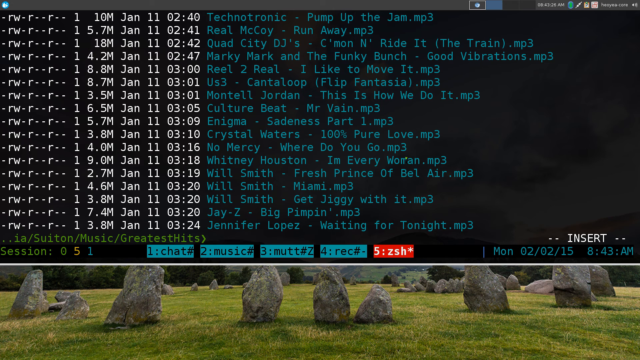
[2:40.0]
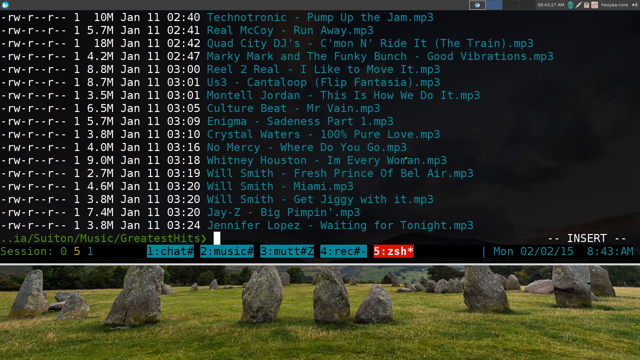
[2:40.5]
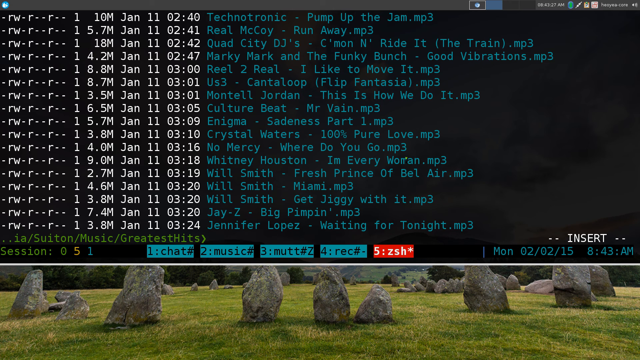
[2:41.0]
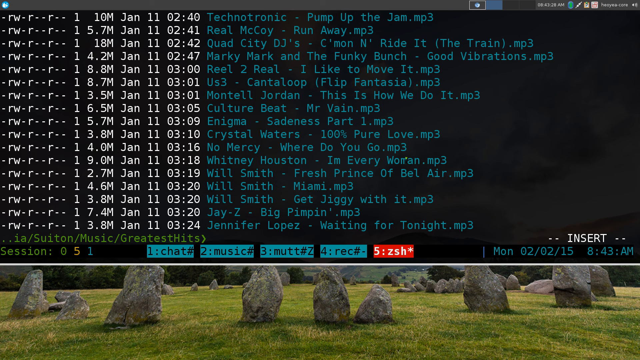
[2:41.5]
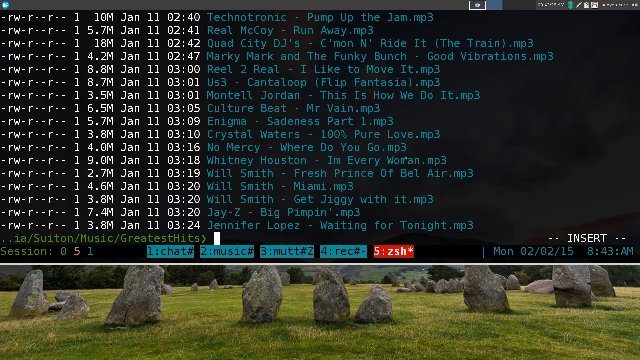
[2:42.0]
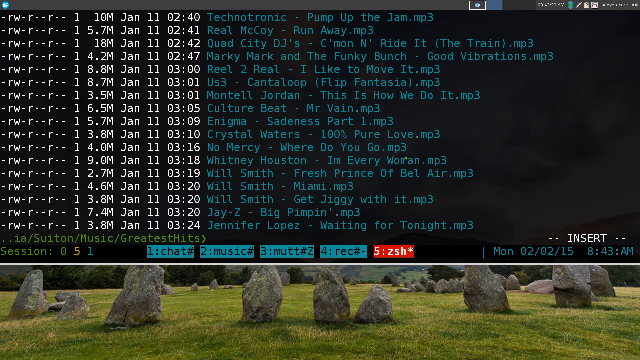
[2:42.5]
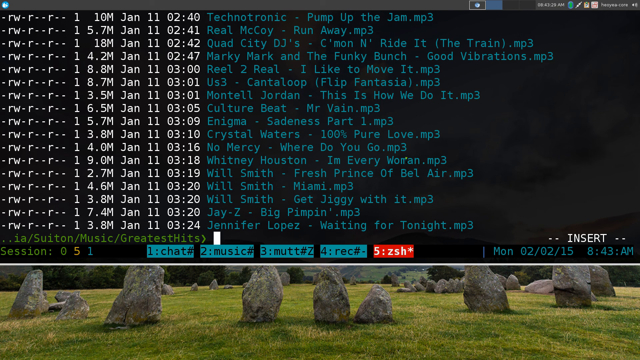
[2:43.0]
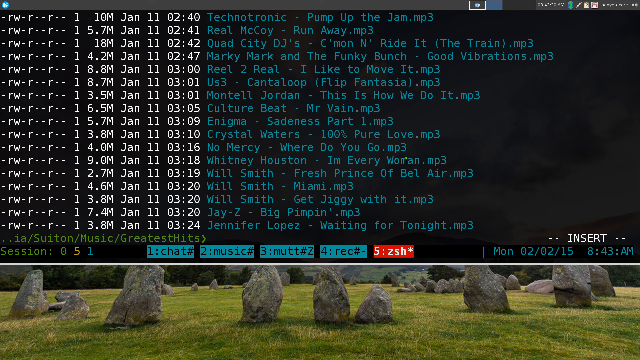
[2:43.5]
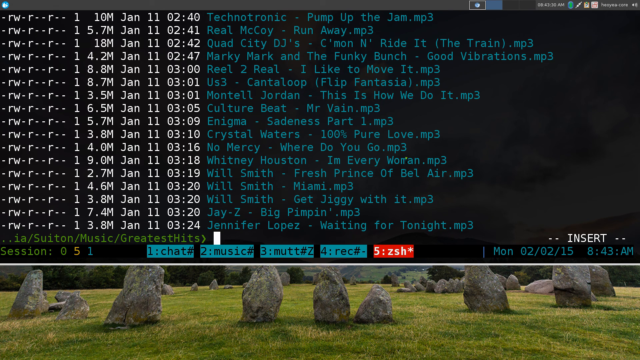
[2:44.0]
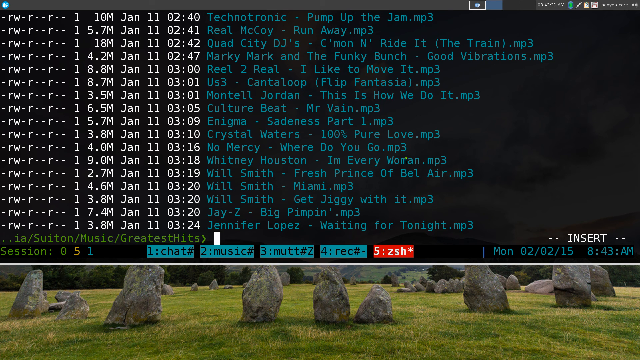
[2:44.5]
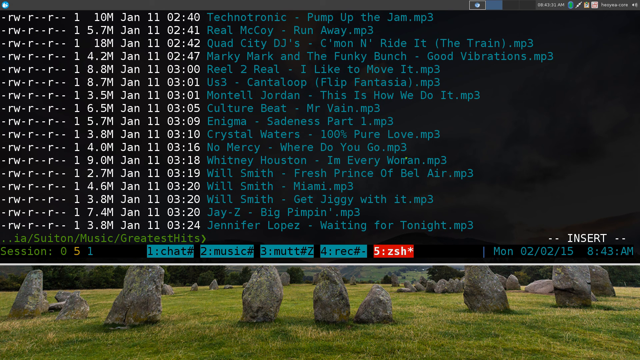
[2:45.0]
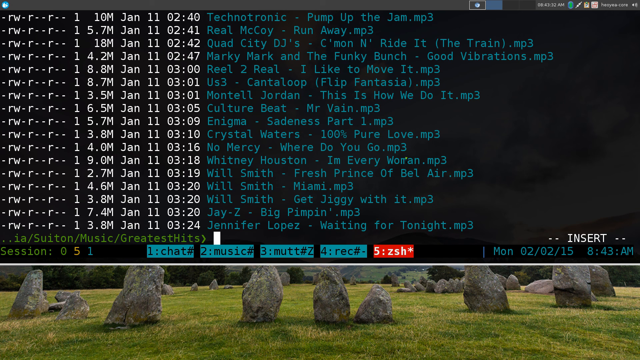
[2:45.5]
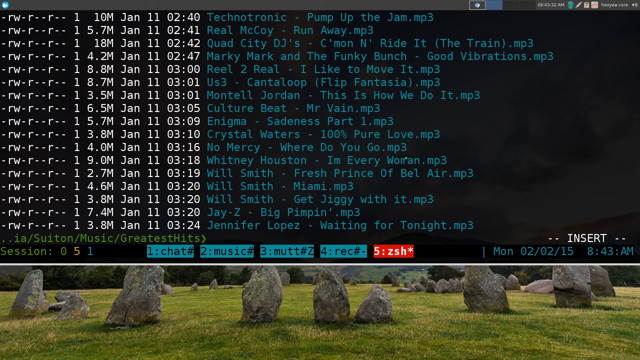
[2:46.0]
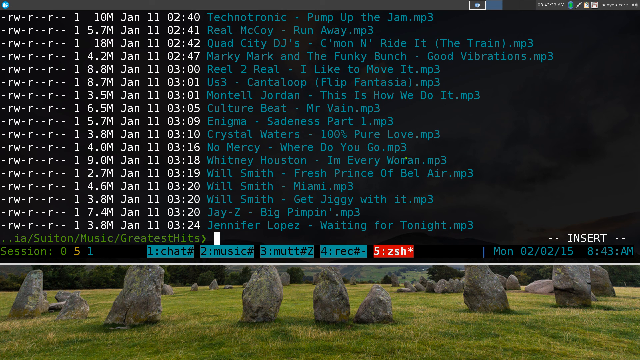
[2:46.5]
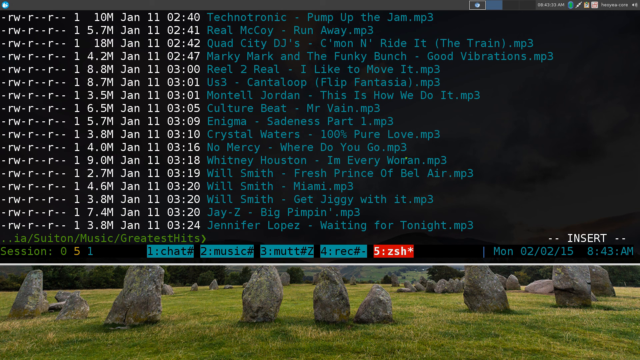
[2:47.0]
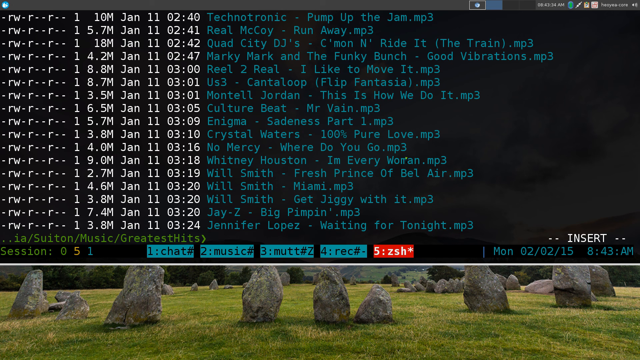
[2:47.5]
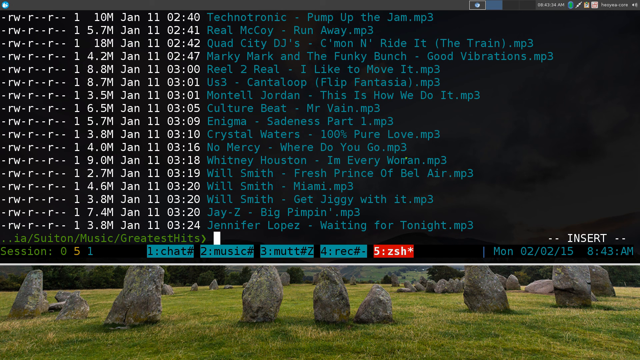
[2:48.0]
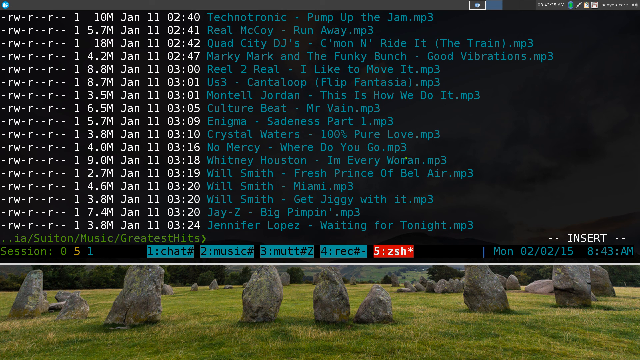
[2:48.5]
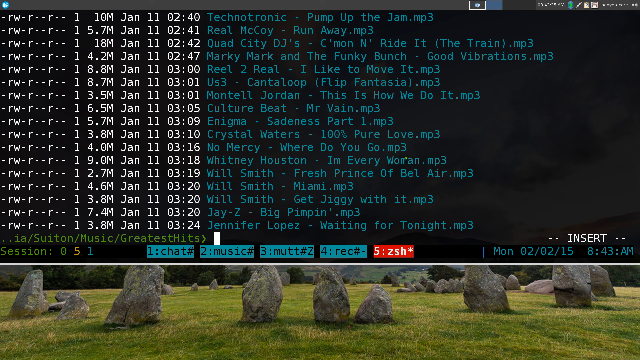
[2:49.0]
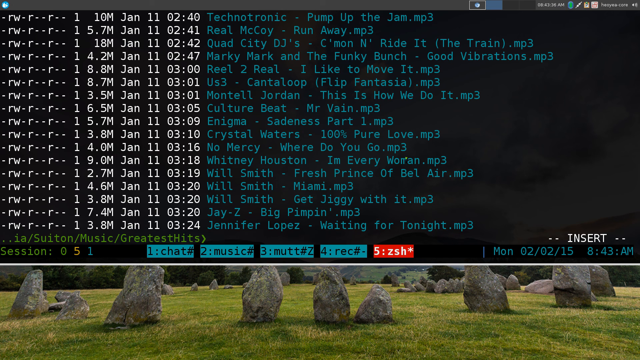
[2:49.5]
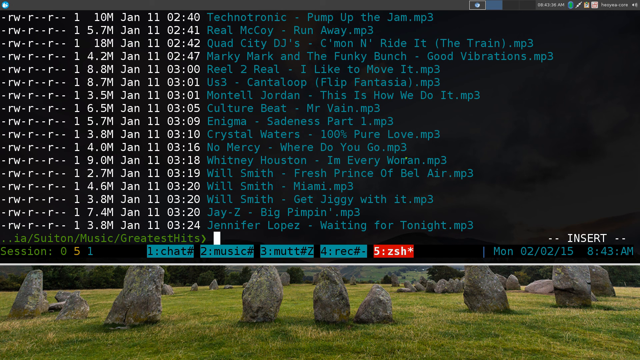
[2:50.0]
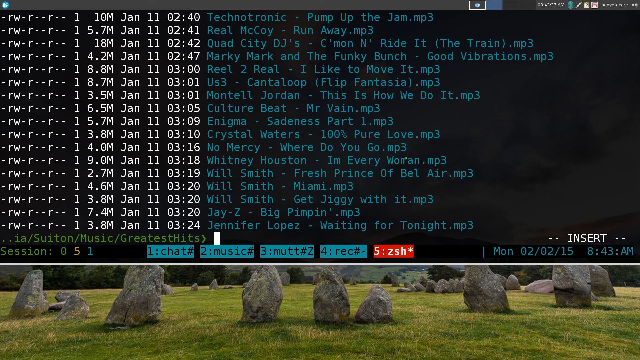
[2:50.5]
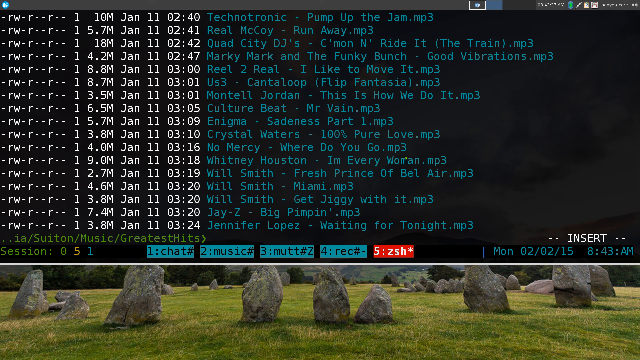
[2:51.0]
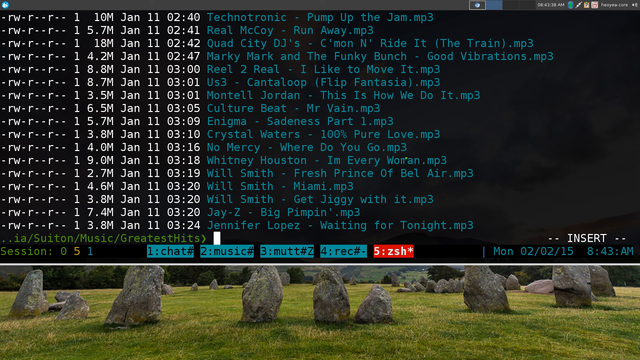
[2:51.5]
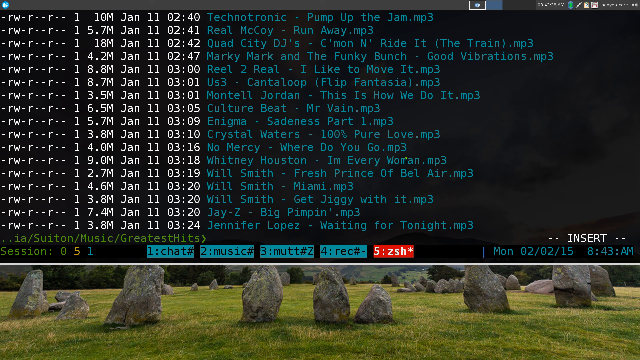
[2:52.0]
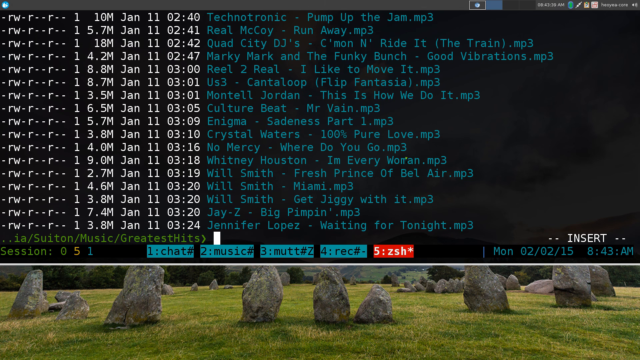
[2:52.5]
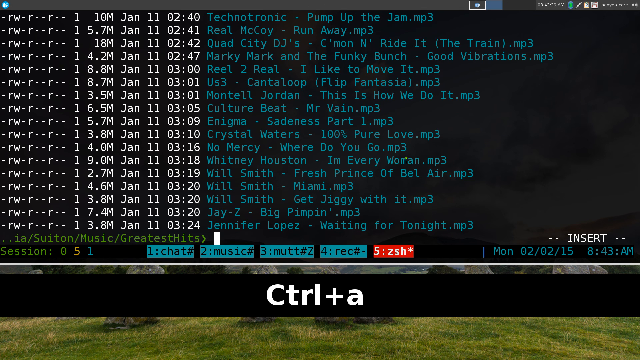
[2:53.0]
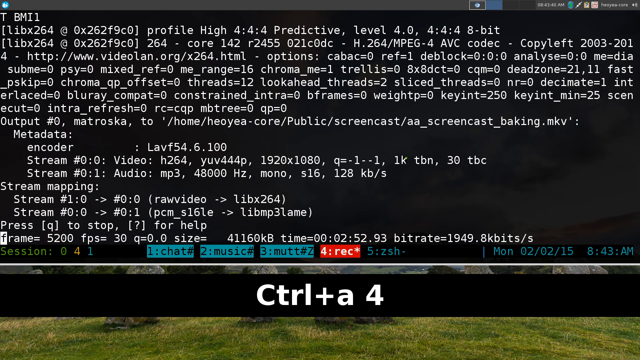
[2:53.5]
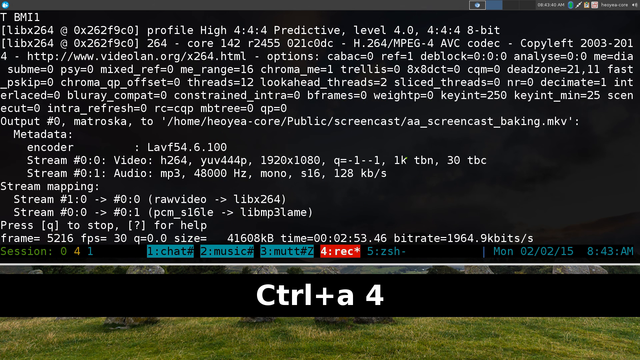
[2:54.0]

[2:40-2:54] The user stays on the initial terminal screen with all the song names for about 10 seconds, with the text entry cursor blinking multiple times, before typing control plus A, which exits that terminal. A screen then appears filled with text about how the terminal works, what stream is playing, and how it maps the data into a format that can be played through the terminal player. The user presses 4 and then the letter Q, apparently to end the recording.